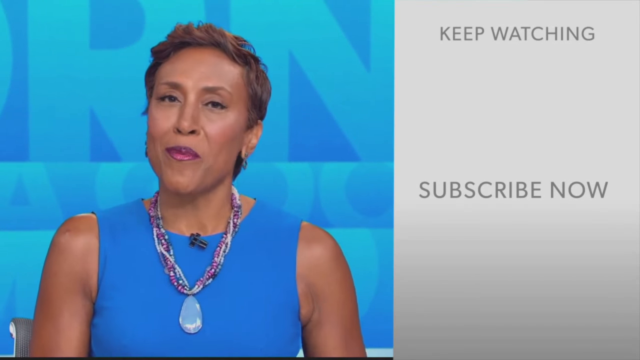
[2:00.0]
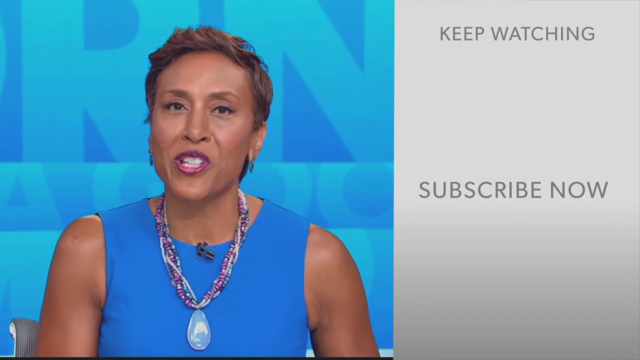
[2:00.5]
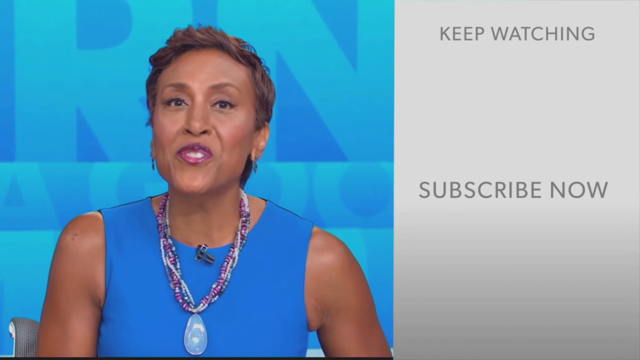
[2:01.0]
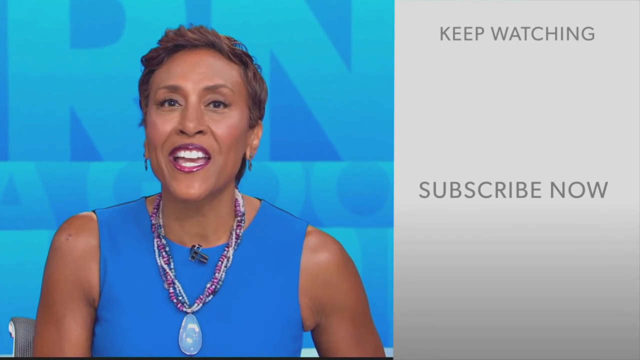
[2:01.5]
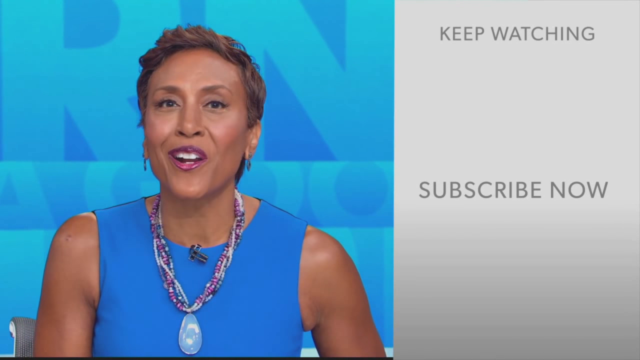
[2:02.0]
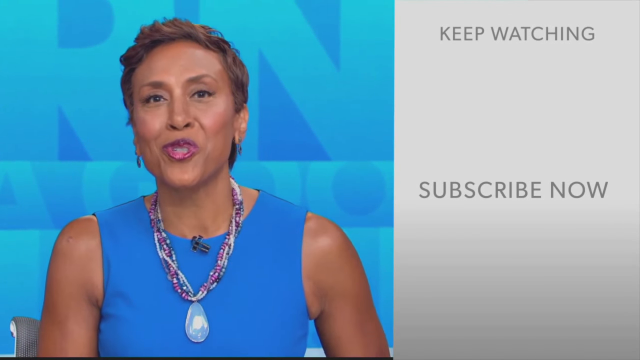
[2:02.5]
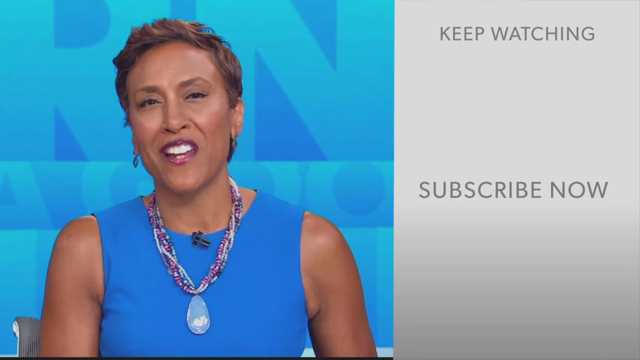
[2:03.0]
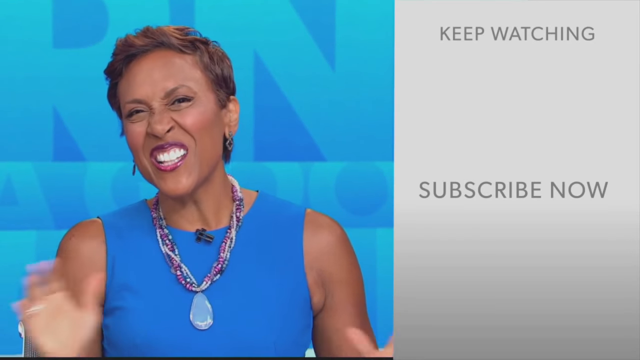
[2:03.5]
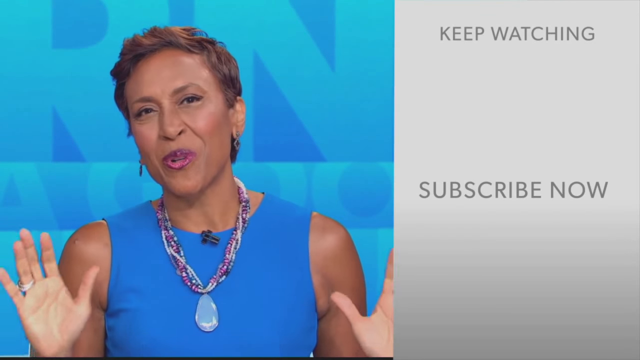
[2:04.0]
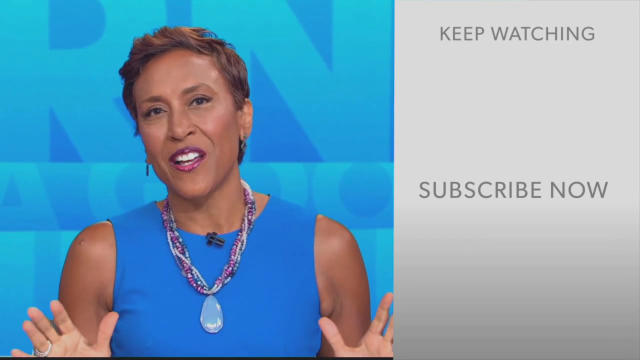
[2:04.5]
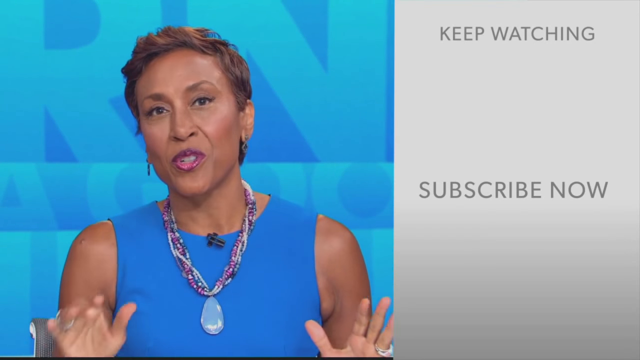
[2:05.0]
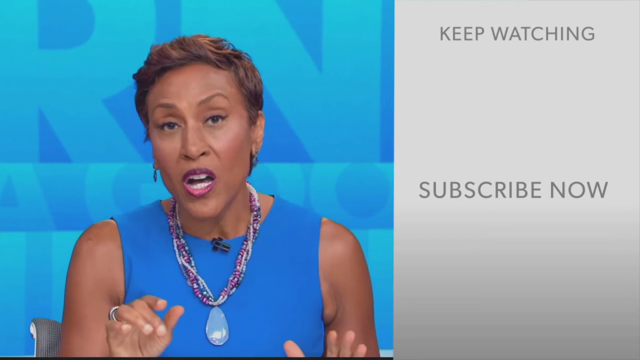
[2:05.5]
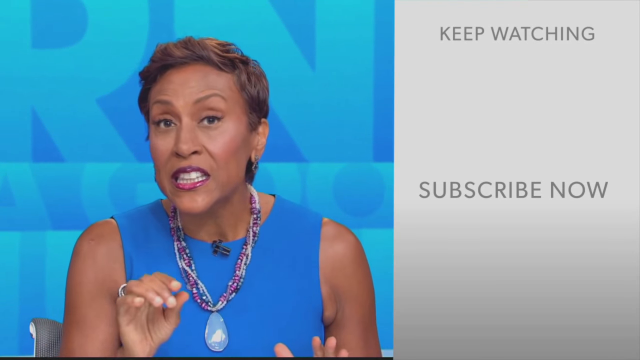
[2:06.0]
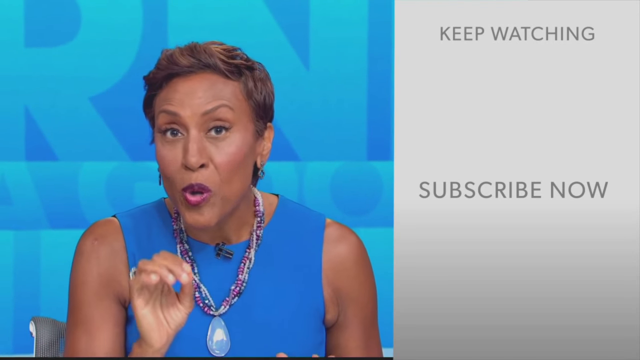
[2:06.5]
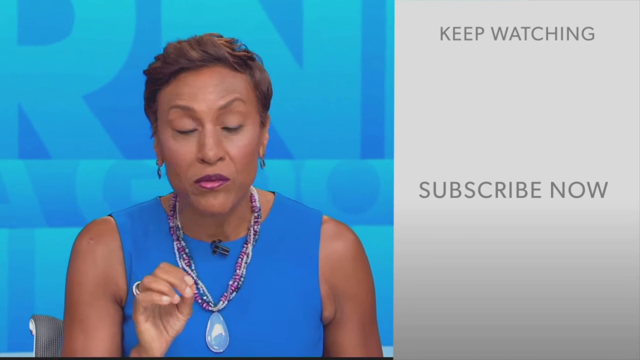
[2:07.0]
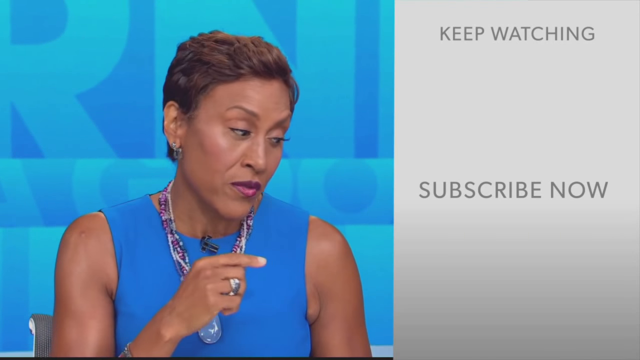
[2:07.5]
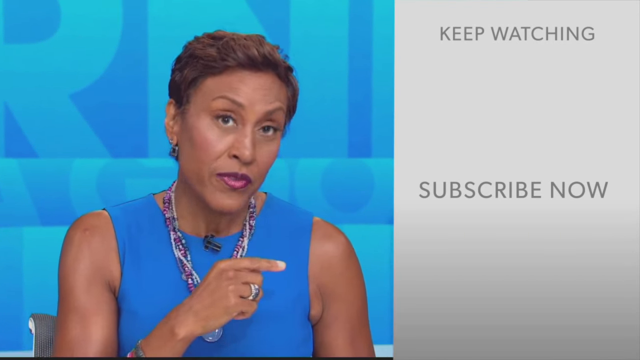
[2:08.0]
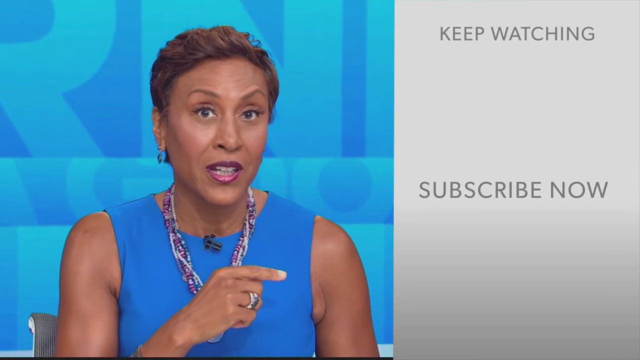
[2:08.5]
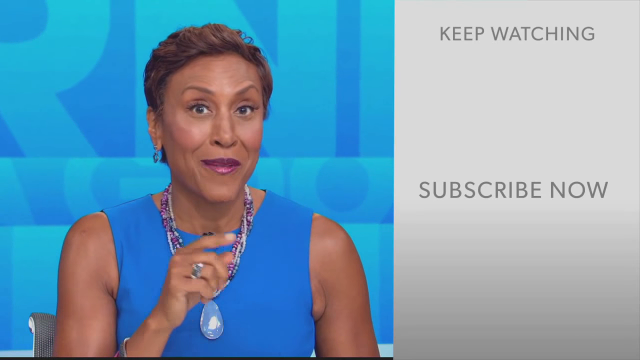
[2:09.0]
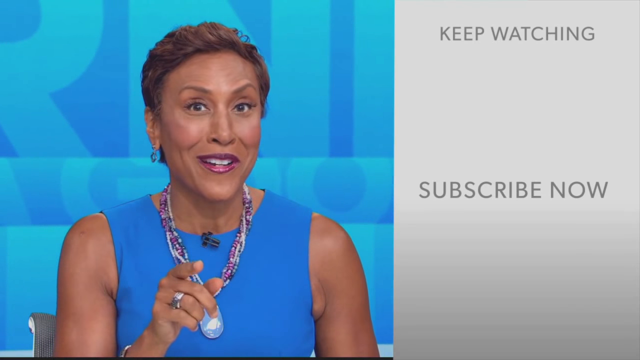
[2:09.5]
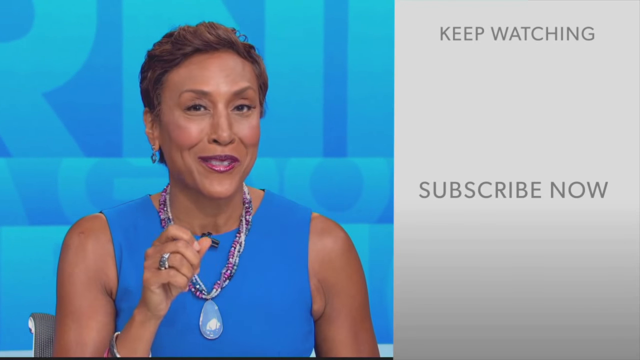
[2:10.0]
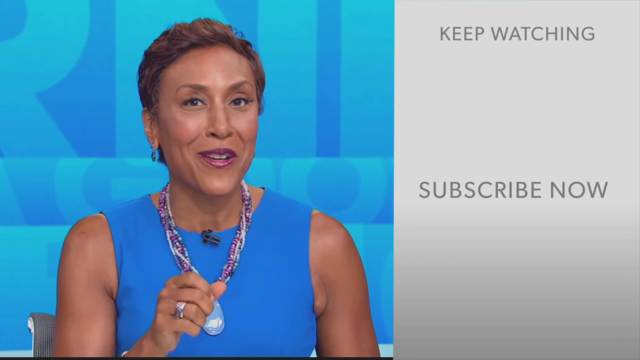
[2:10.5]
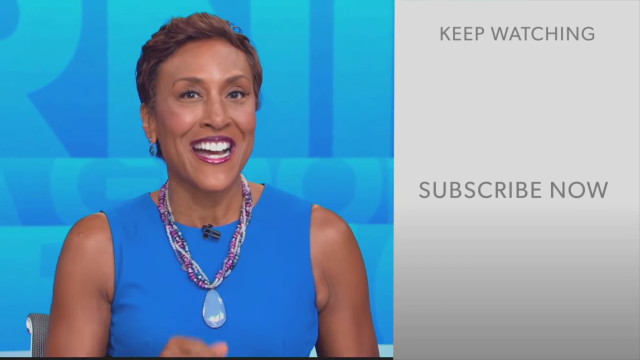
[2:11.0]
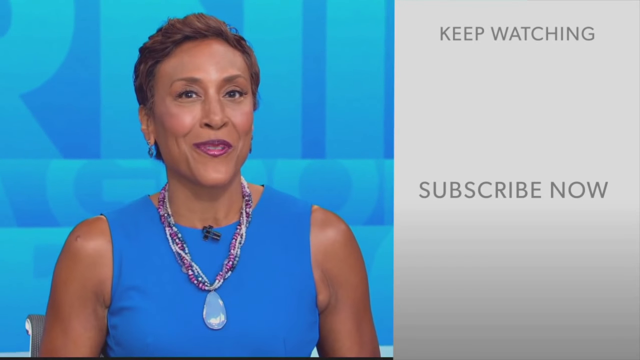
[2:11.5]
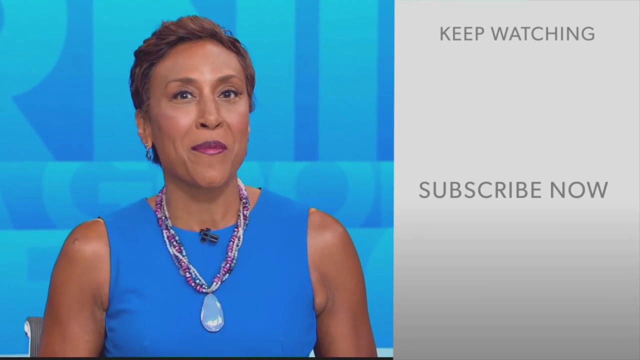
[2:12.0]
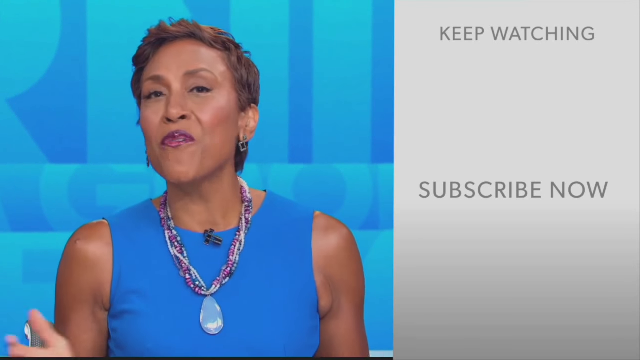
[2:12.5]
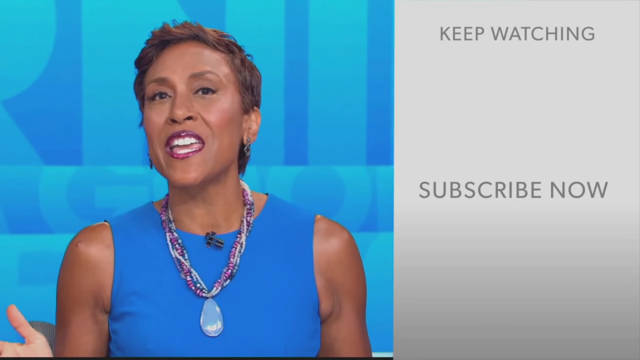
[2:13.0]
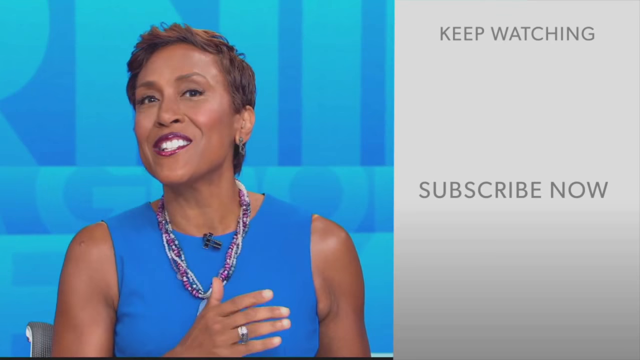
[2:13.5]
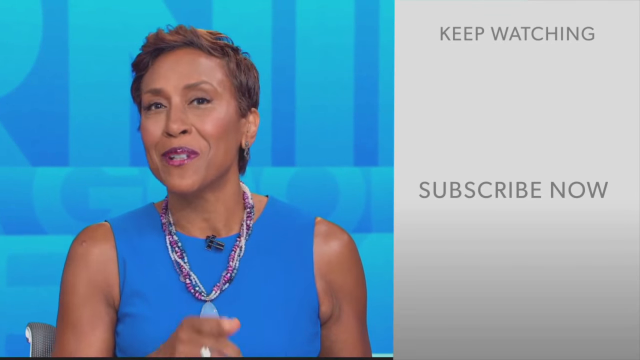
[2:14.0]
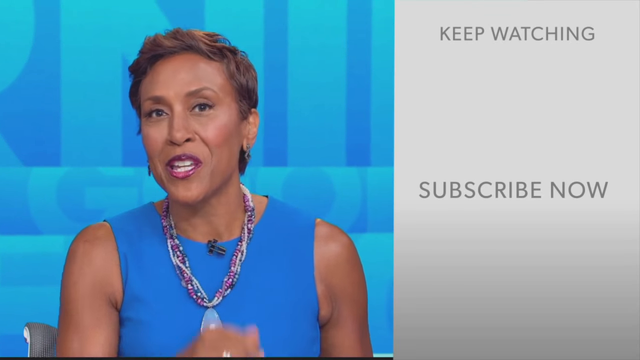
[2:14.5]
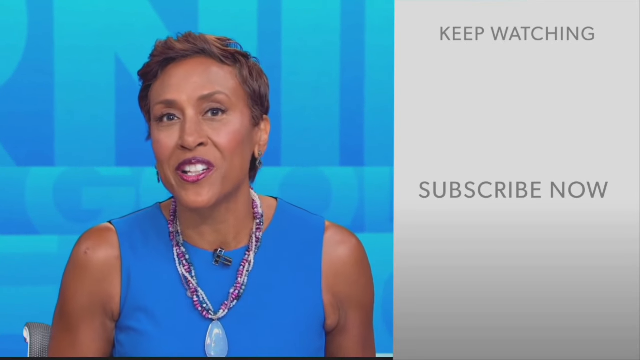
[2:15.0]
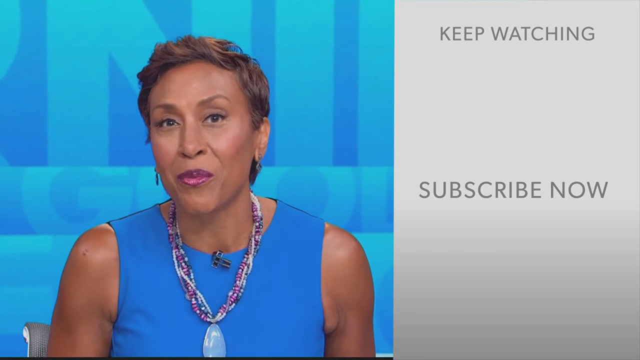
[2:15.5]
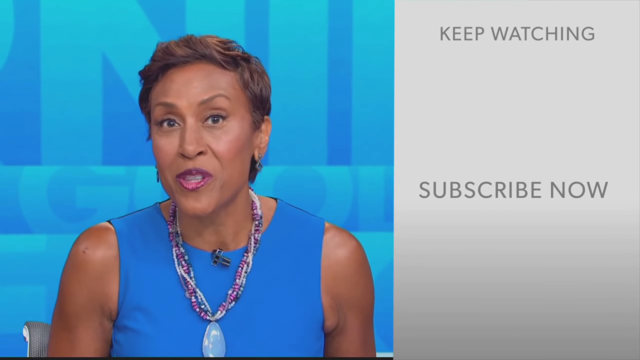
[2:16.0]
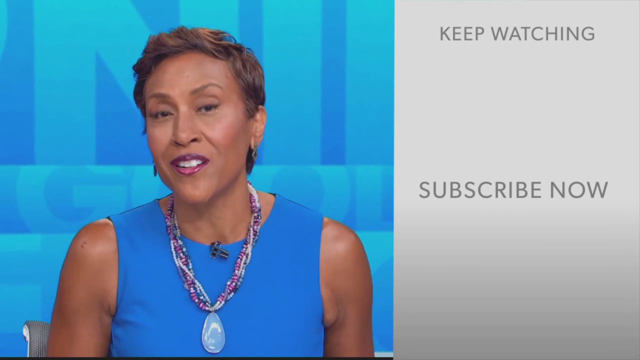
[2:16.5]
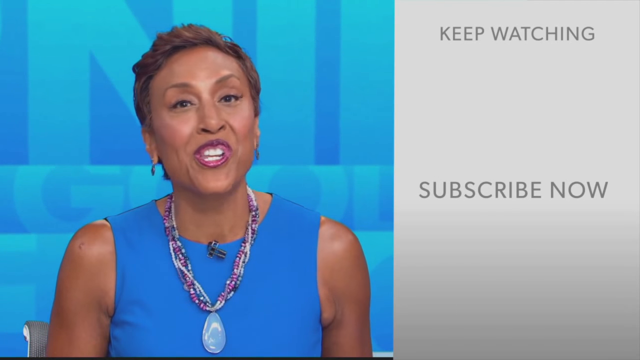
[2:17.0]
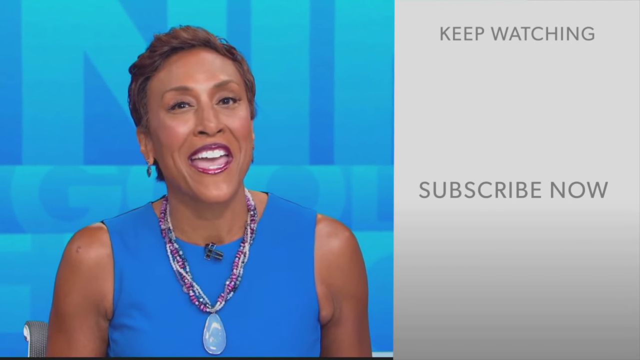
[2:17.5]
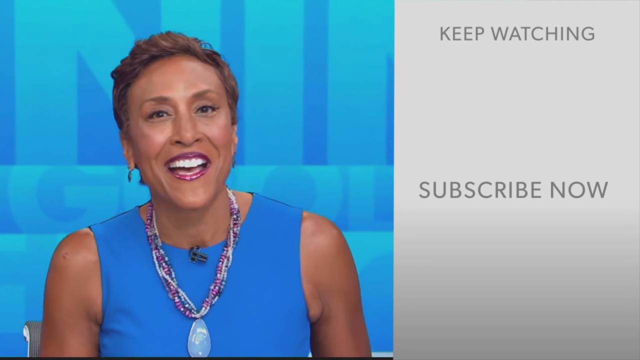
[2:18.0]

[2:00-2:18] The woman gestures to her right hand side and points while speaking, and she smiles at the audience. She has rings on her fingers and wears a bracelet or a watch. In the background, letters move across a moving background or screen in blue, including light blue. On the right-hand side are the words "keep watching" and "subscribe now". She smiles, moves her hands and points with her fingers as she addresses everyone.